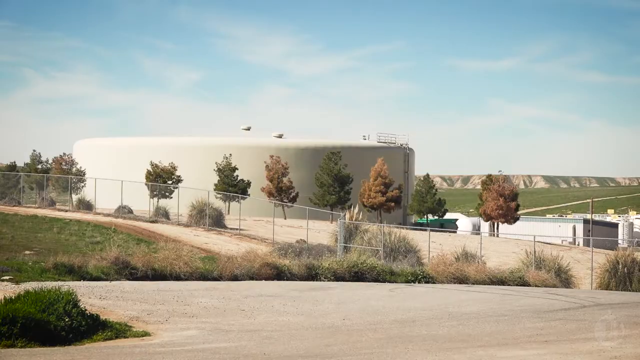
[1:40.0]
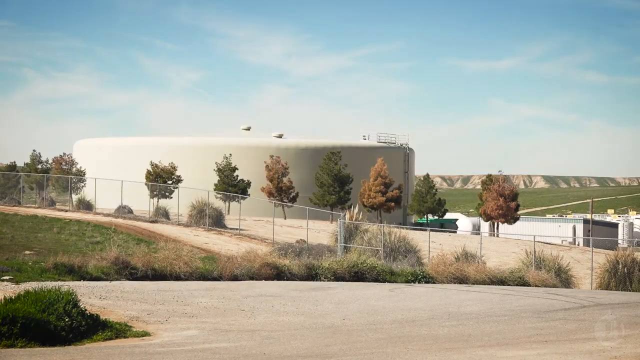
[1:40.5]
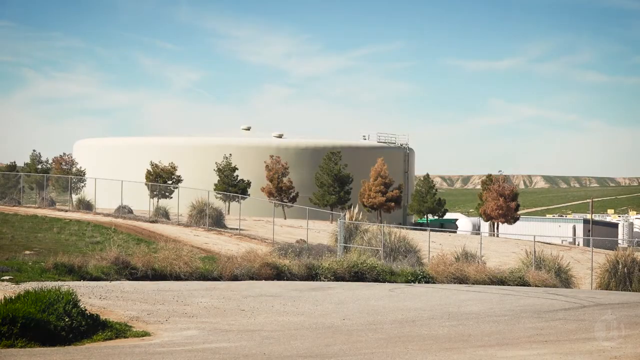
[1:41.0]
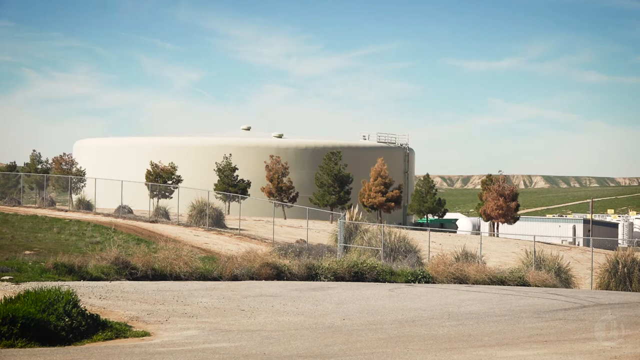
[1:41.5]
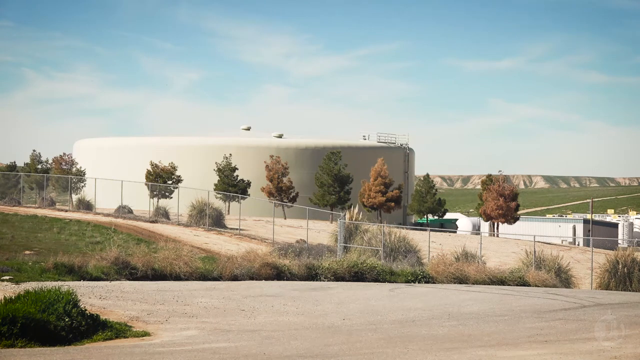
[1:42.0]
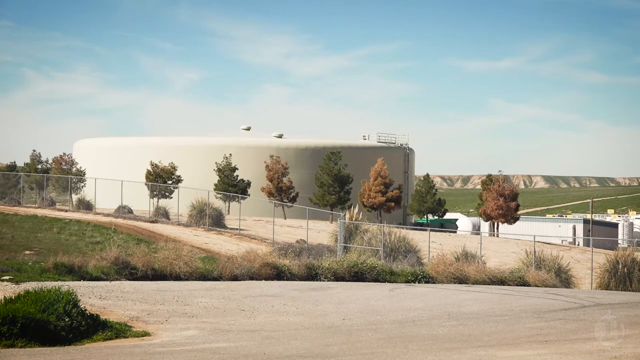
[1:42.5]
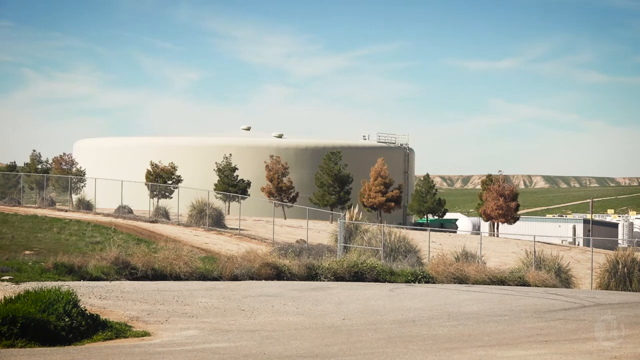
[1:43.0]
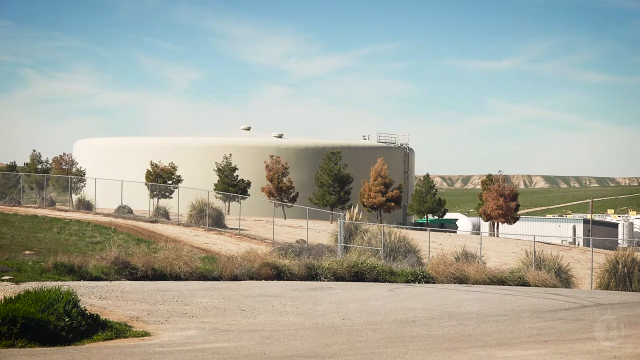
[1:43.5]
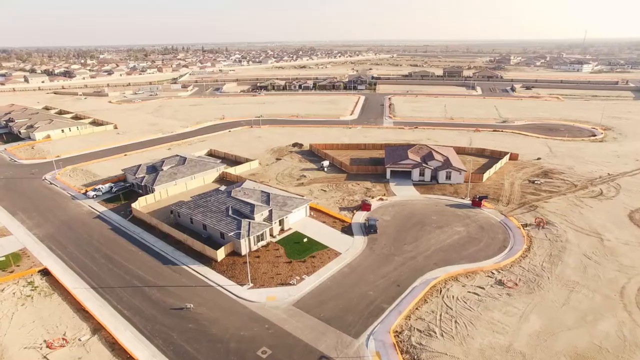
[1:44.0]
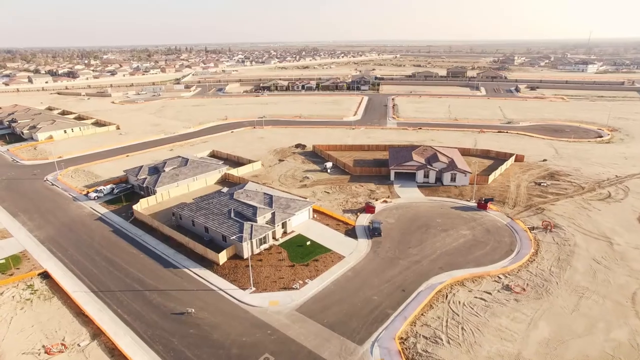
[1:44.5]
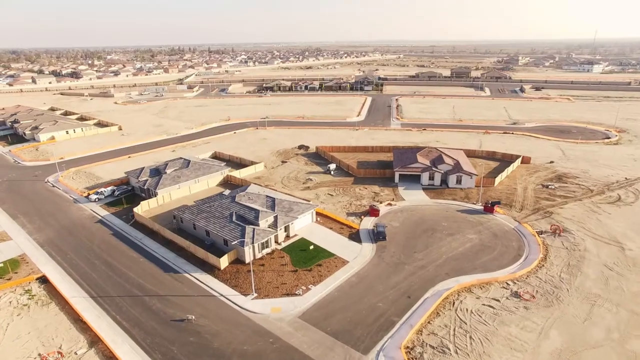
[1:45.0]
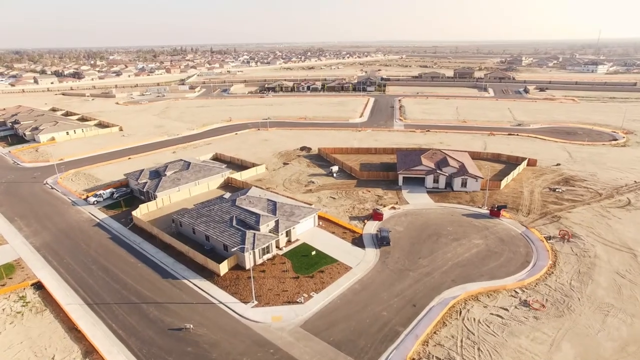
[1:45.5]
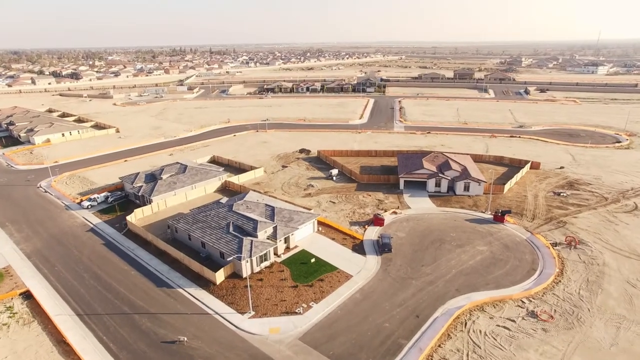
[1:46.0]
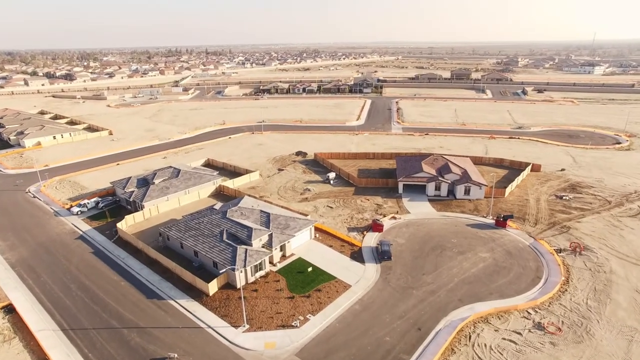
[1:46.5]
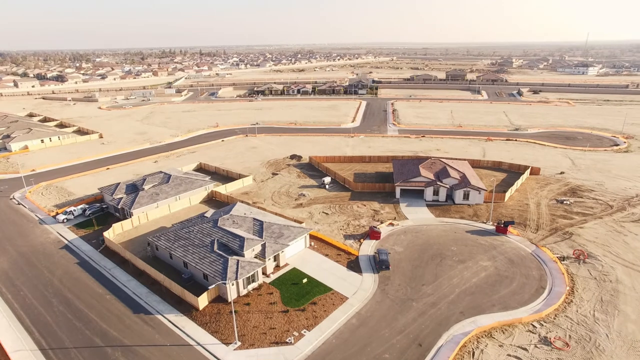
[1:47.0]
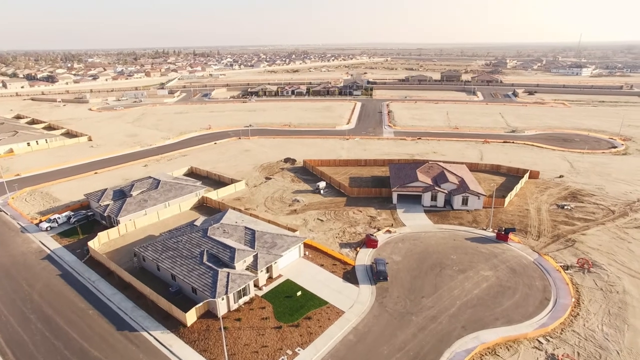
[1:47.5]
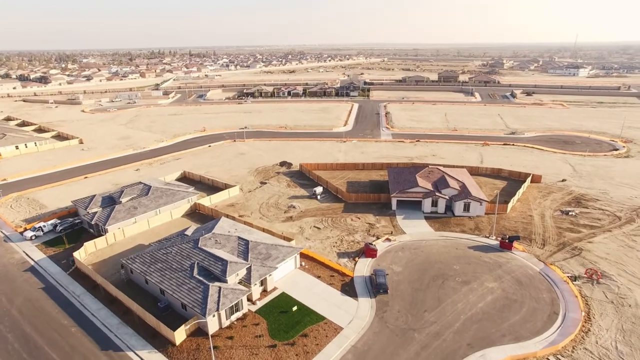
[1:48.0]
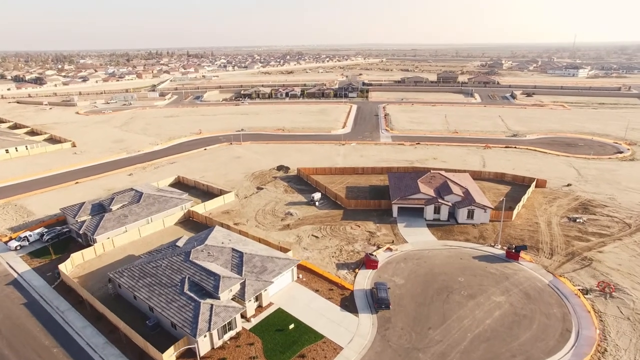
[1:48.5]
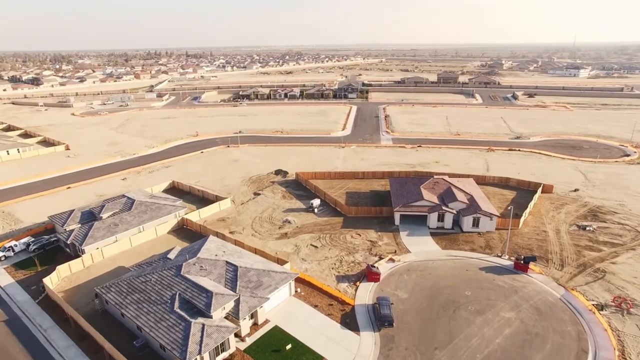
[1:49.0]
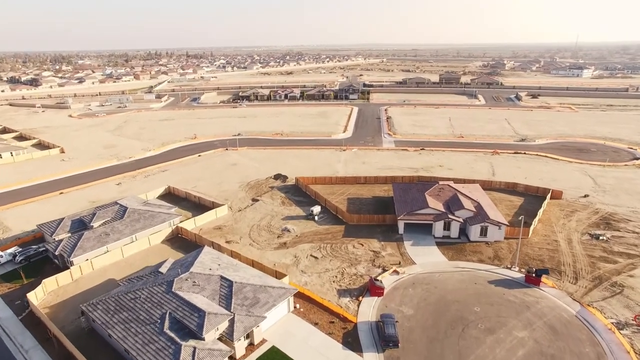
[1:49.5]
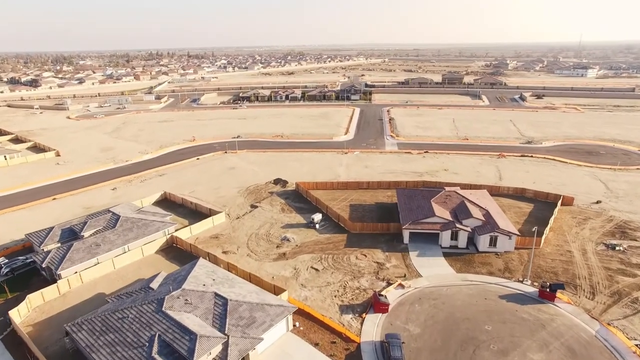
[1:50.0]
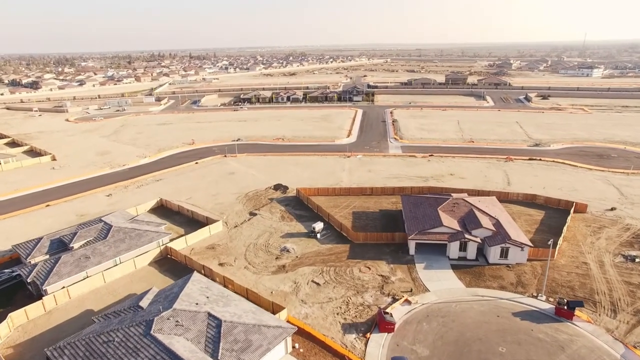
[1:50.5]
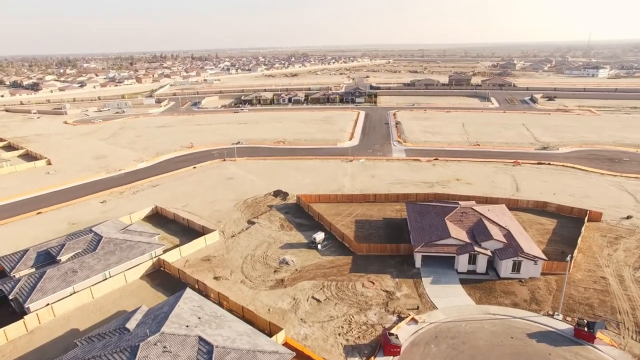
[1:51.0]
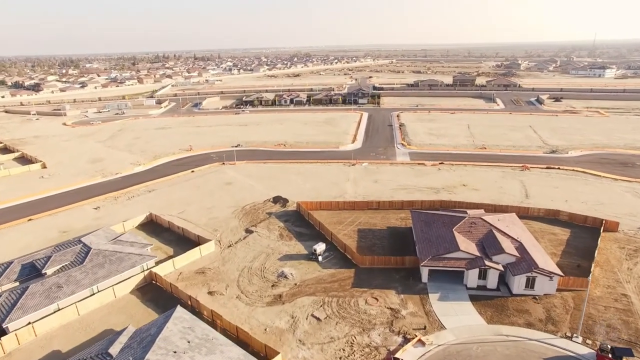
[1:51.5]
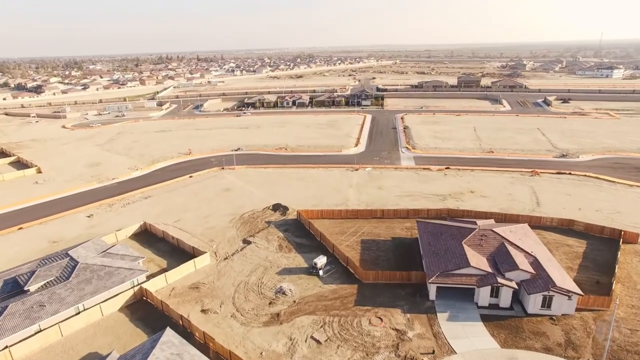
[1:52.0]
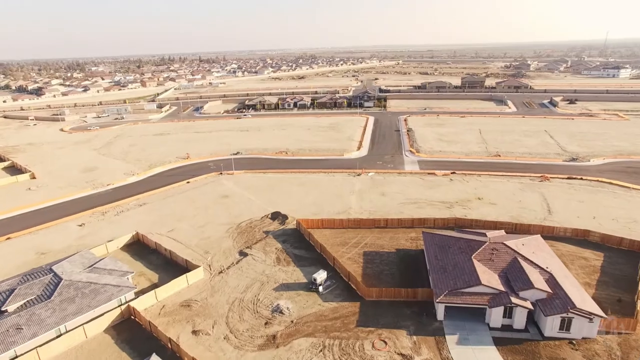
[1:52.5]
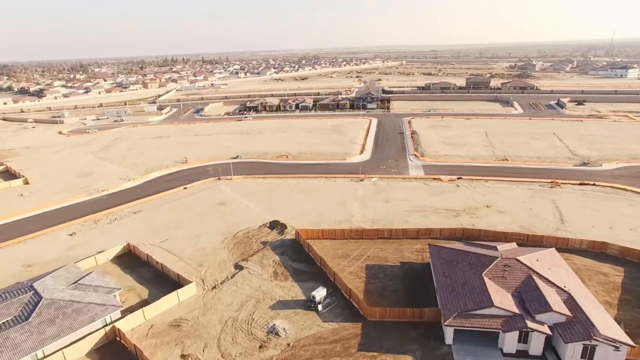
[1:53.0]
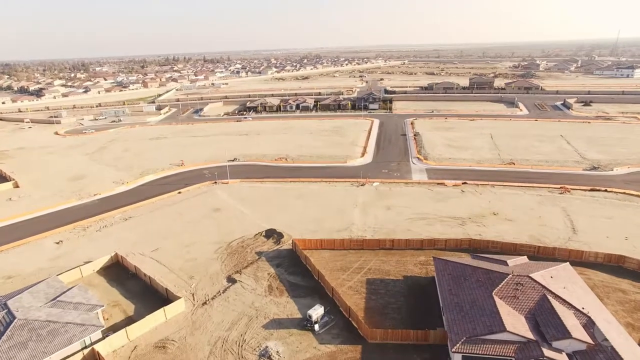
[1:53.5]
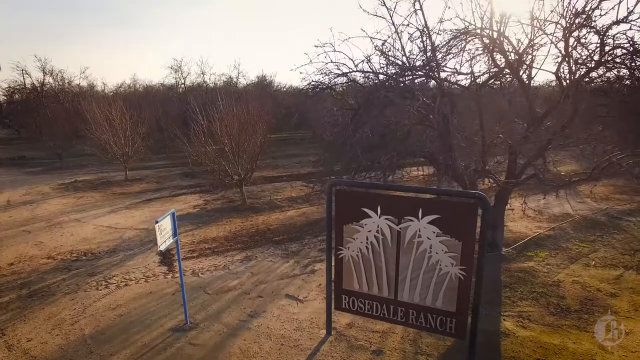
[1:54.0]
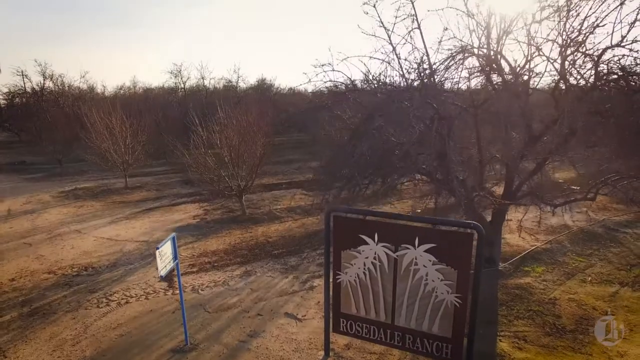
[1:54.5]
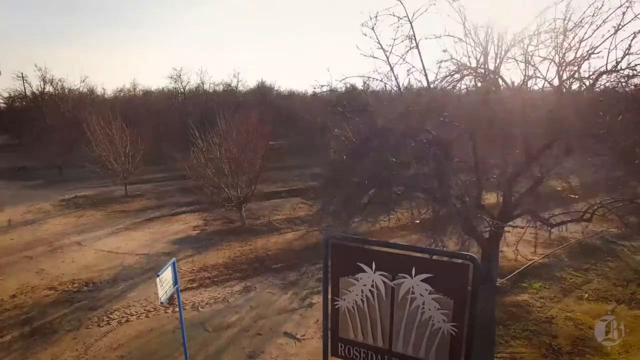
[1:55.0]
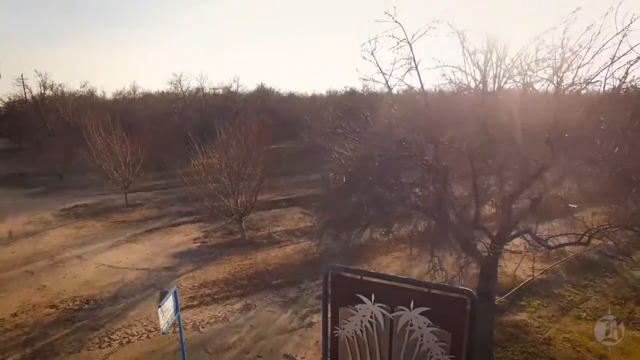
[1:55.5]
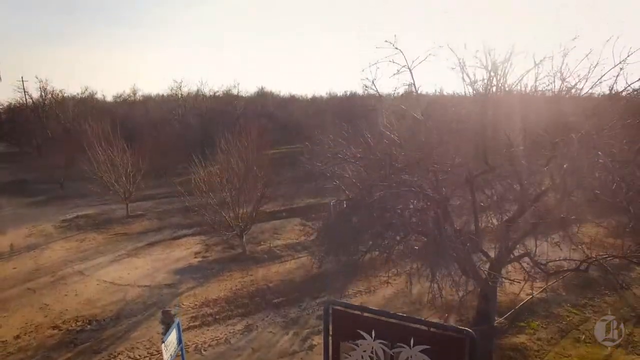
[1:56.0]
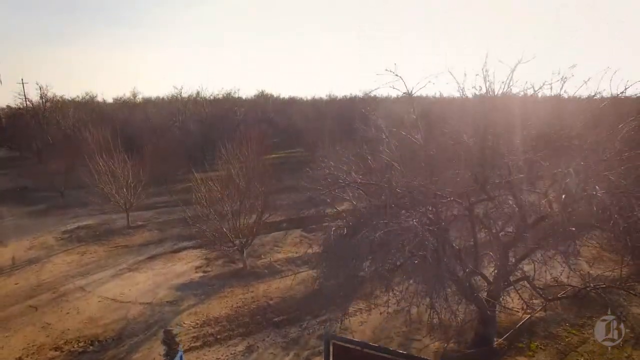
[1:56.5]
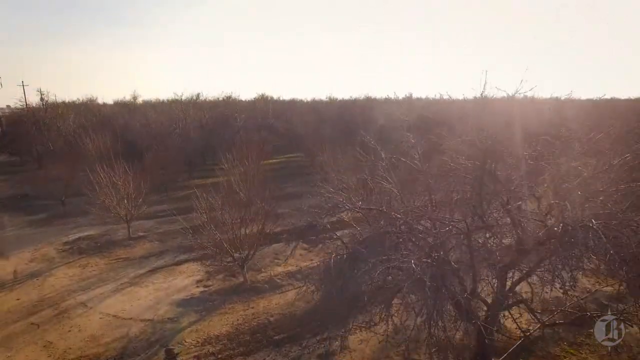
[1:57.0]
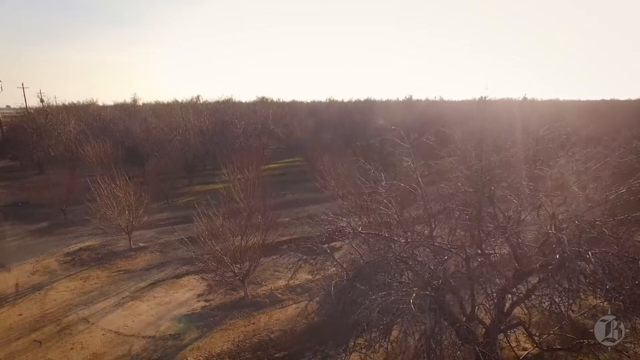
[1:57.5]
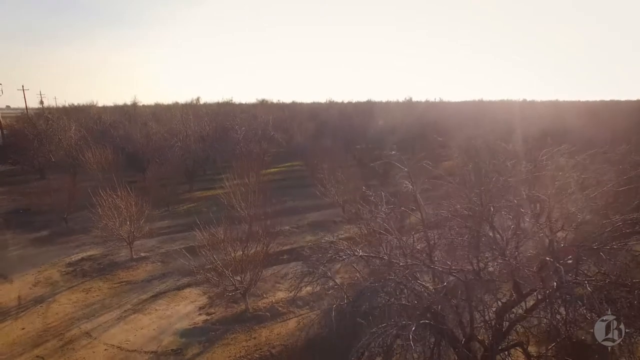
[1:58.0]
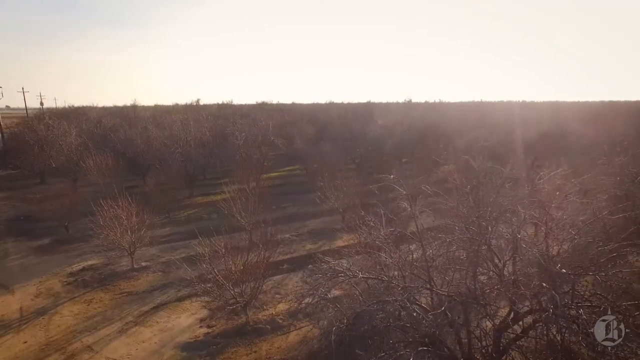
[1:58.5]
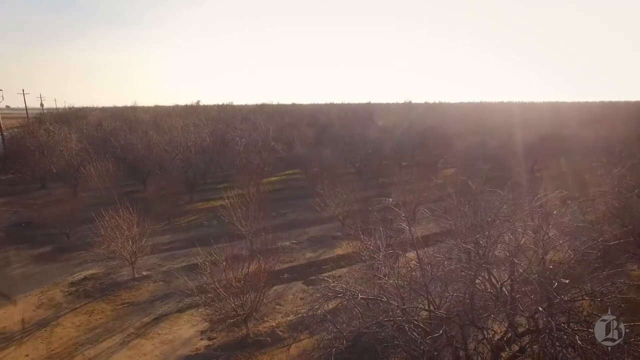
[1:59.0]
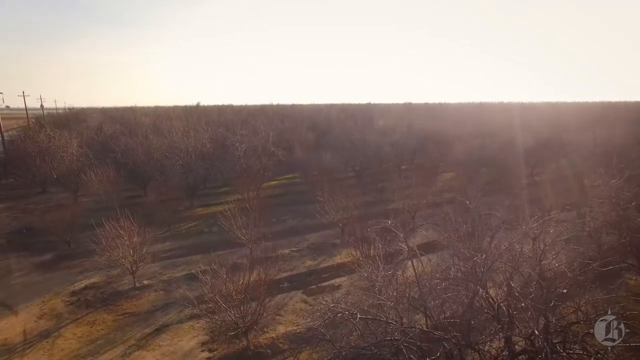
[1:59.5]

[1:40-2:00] A very large water treatment tank appears, with what looks like two white circular knobs and, on the right side, what looks like a ladder going up to a little platform. In front is a row of trees of slightly different colors: some green, some with leaves turning a little yellow, others a little more brown. The area is fenced in with dirt all around, and dotted along the fence are what look like bushes resembling piles of grass. Outside the fence is a paved area of dirt and then grass, and in the foreground there appears to be an area that has been cleared. Next is an aerial view of a community development showing the different roads. The view looks down at a little cul-de-sac with a built home on a dirt lot with a wooden fence around it, and another home on the left side with a gray rooftop. Both homes are fenced in; one has a little strip of grass and mostly decorative rocks, and the other, on the left side, has a couple of trees on a smaller lot. They all face different directions. Behind them the roads are all done, with another cul-de-sac, and the whole area is just dirt. On the left side is another patch of built homes, and in the far distance is a huge community. The camera hovers over these homes, showing construction equipment on the ground. Then an aerial view of a community shows a sign reading "Rosedale Ranch" with white clip-art-like palm trees at the entrance, and another sign on a blue pole that is angled so it cannot be read. The camera hovers over the top, showing rows of trees that are all barren of leaves. It appears to be late afternoon, with the sun starting to set. As the camera hovers on, miles and miles of what looks like trees stretch out, with some power lines on the left side.